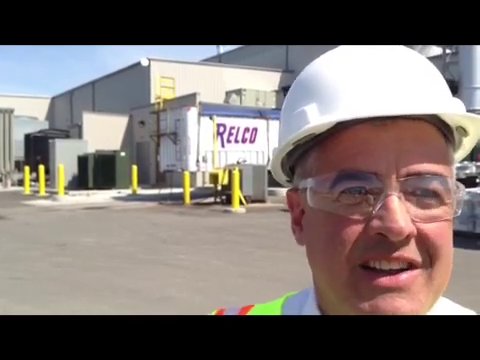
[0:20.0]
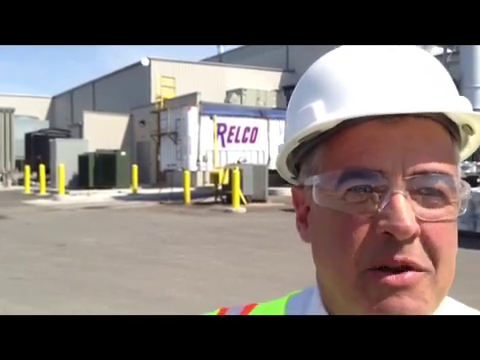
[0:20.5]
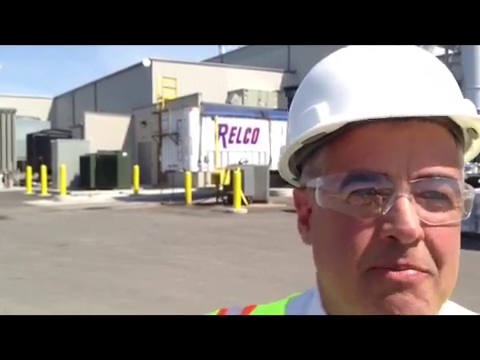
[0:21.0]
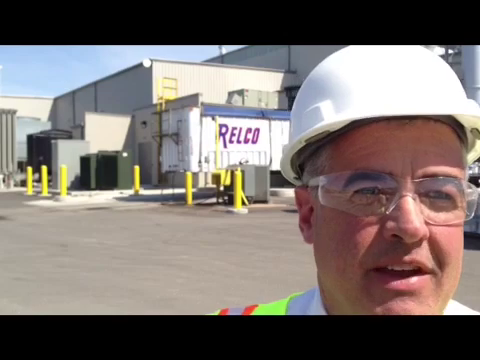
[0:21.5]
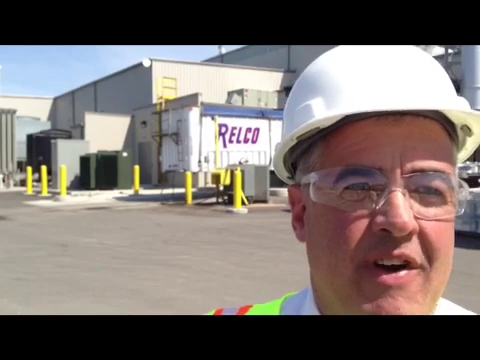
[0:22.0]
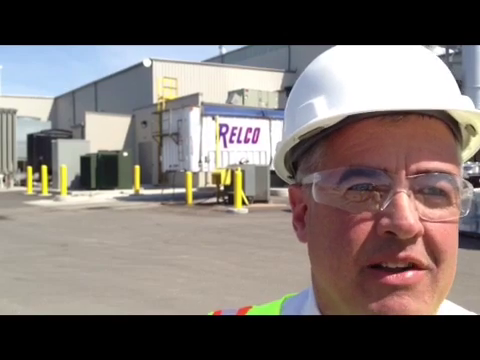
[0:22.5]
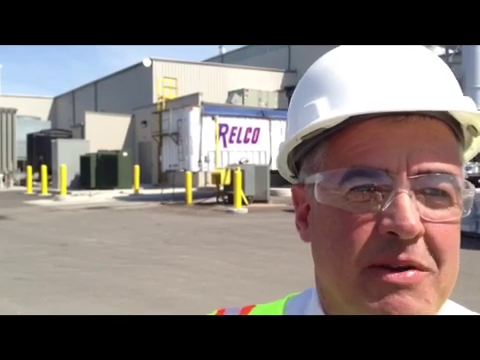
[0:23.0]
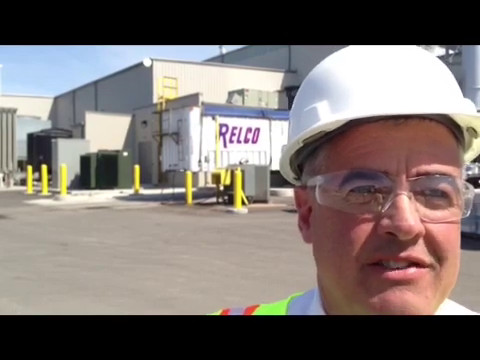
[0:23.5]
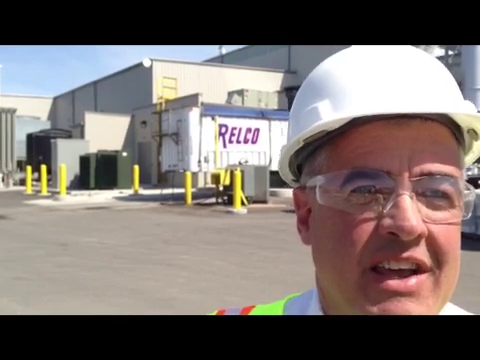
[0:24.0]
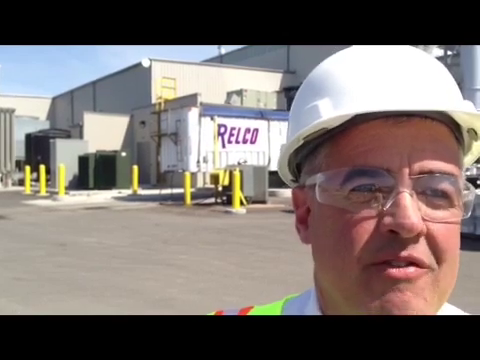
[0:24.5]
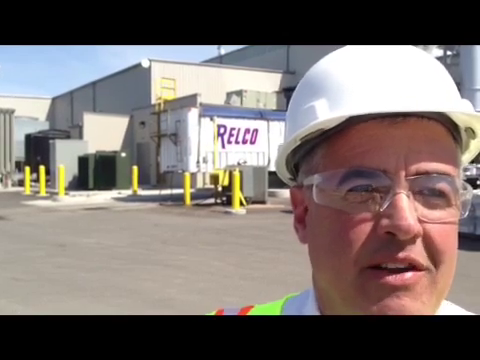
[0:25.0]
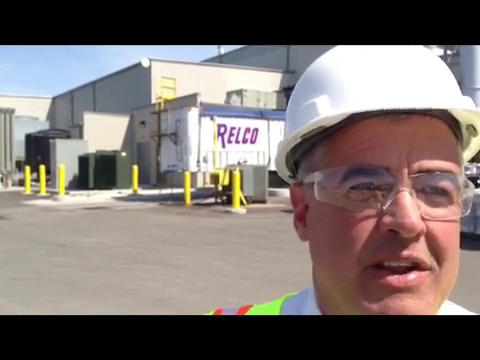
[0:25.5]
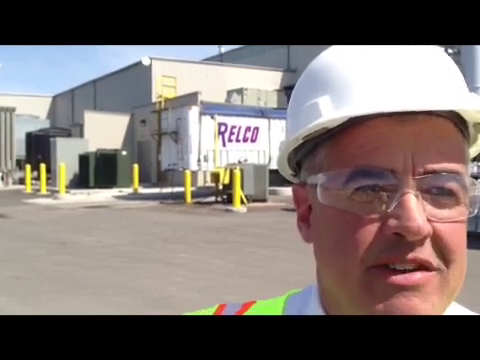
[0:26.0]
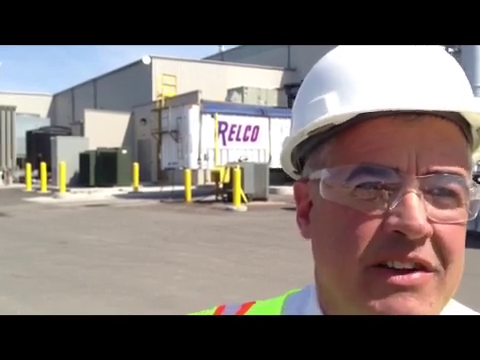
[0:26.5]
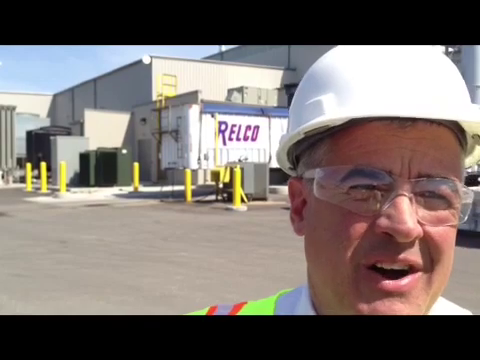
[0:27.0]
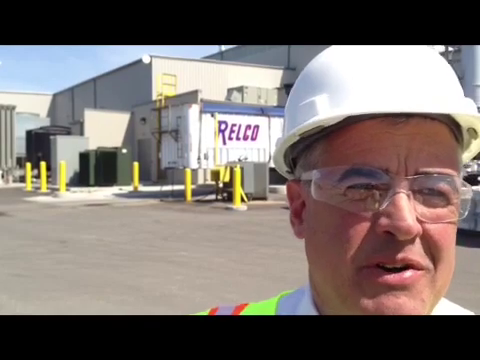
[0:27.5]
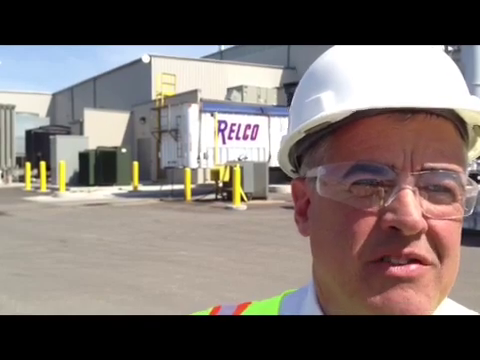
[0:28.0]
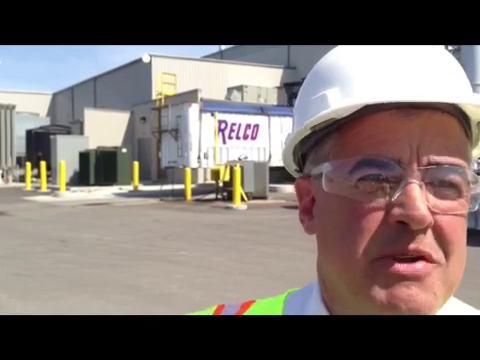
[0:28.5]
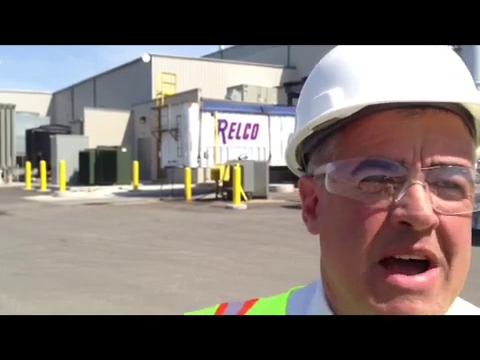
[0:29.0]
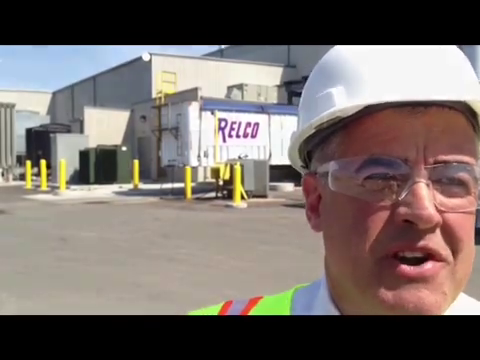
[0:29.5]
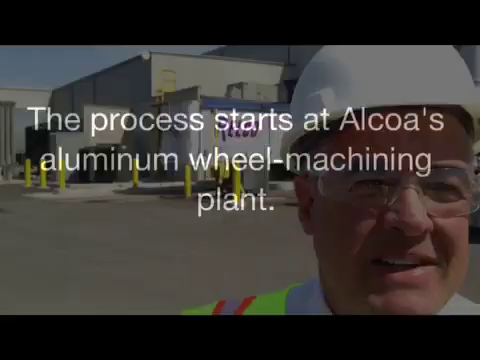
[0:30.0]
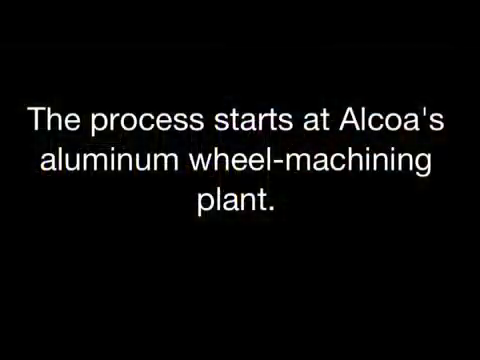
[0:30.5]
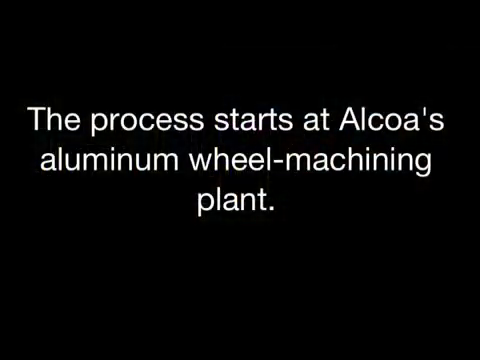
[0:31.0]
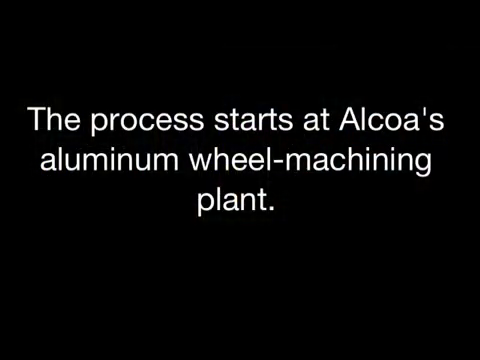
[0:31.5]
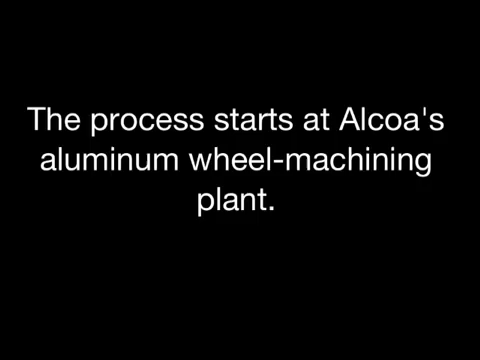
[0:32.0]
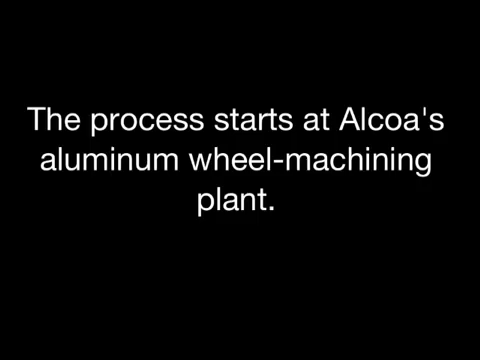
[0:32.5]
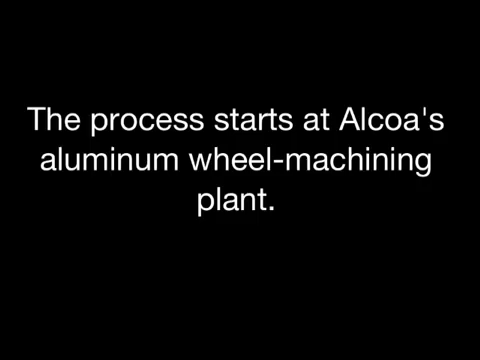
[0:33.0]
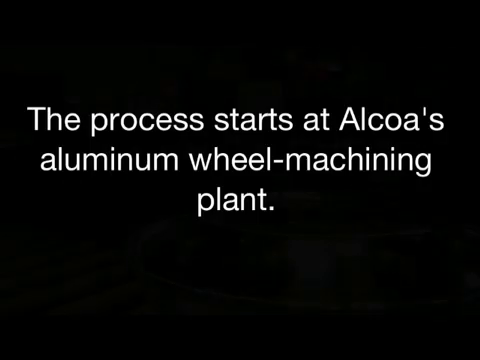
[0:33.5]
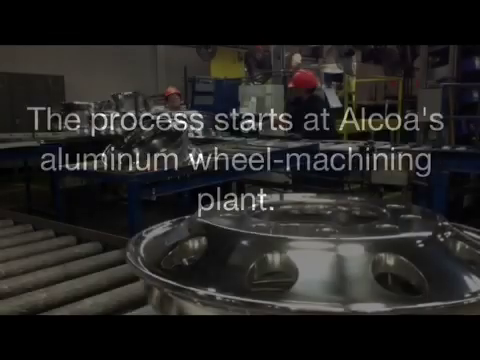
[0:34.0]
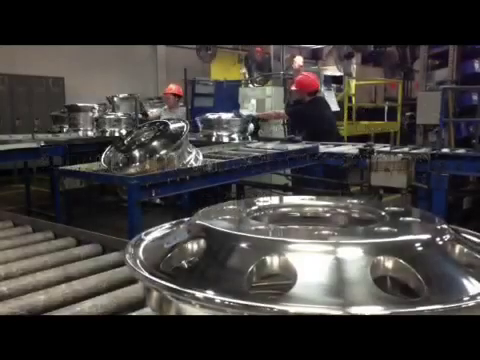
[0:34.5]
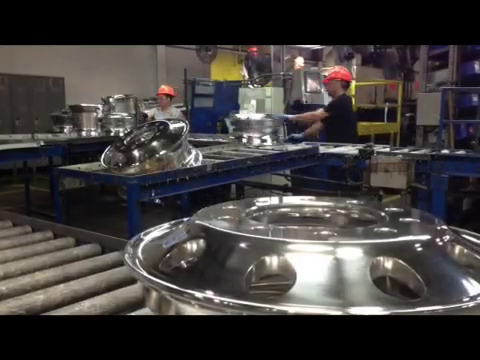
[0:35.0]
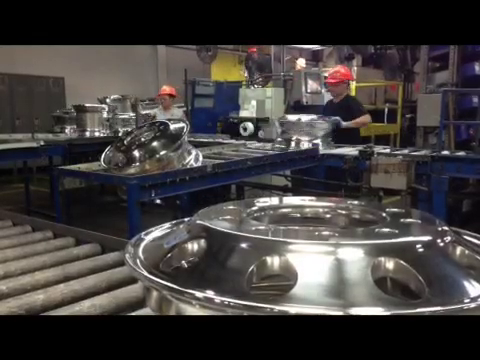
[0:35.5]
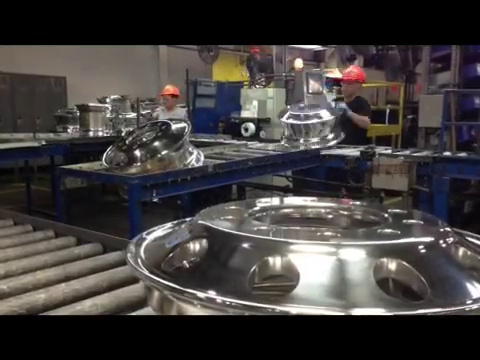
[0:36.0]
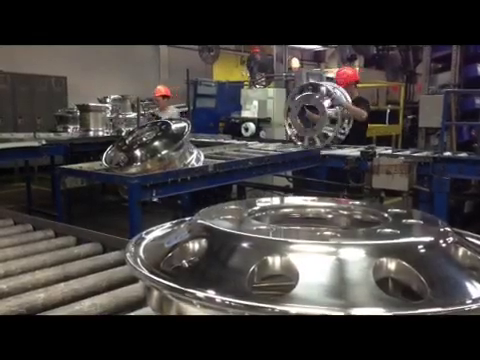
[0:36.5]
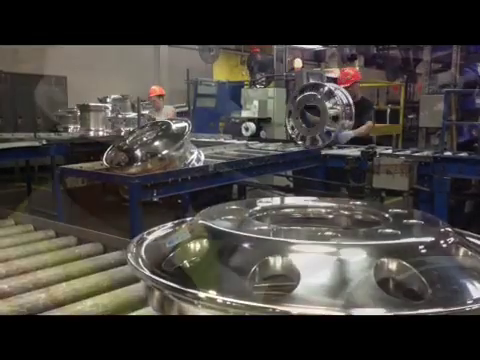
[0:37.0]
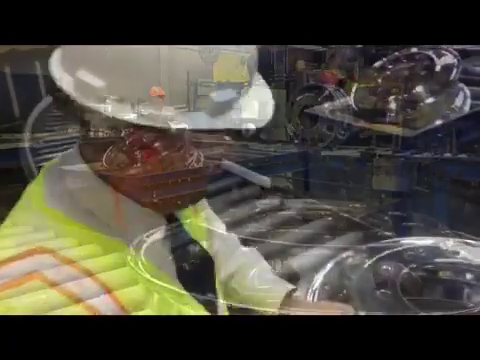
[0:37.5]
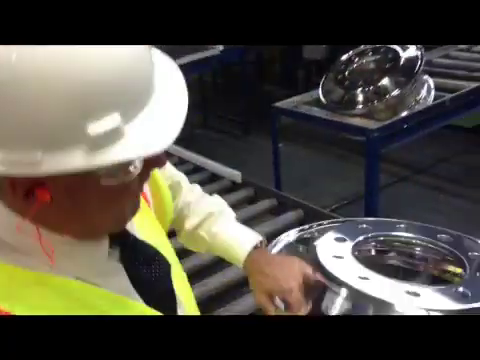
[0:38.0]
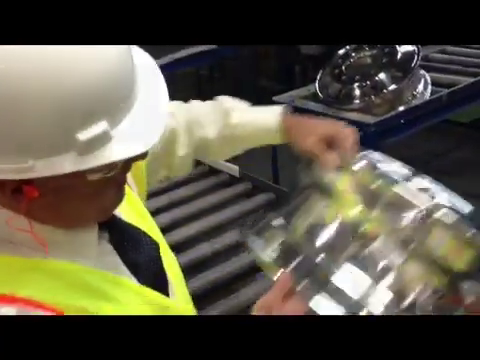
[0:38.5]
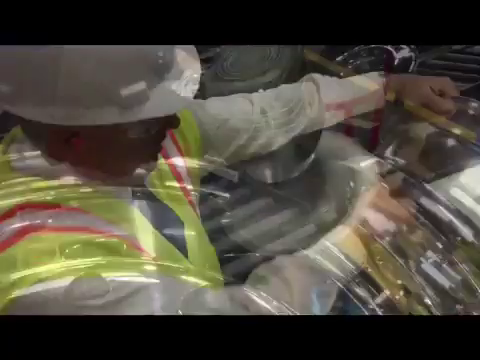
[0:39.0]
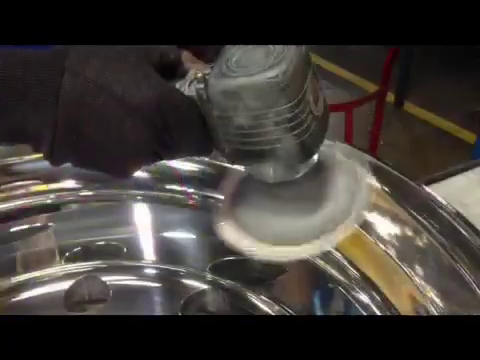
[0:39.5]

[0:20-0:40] A man wearing safety gear and a high-vis jacket talks to the camera, standing in front of a factory unit. When he finishes, the screen cuts to a black background with white text reading "The process starts at Alcoa's Aluminum Wheel Machining Plant." The video then cuts to an interior view of the factory with a conveyor belt. Two workers, both wearing red safety helmets, are in the background. There are aluminium parts that look like wheel centers, and they are being polished by the workers. It is a busy factory scene where aluminum parts are being created.